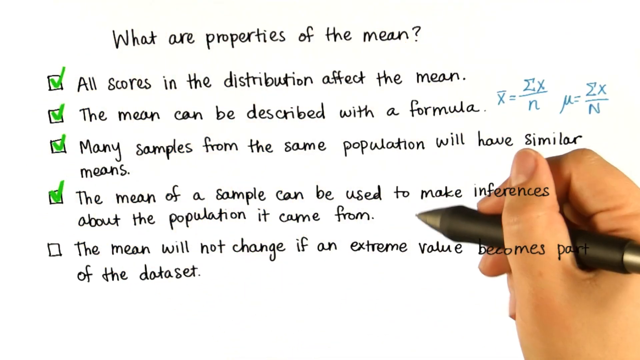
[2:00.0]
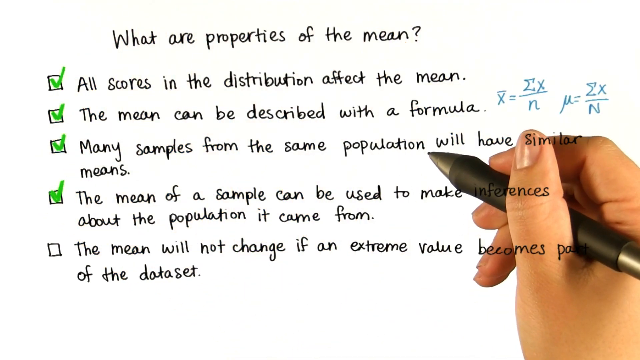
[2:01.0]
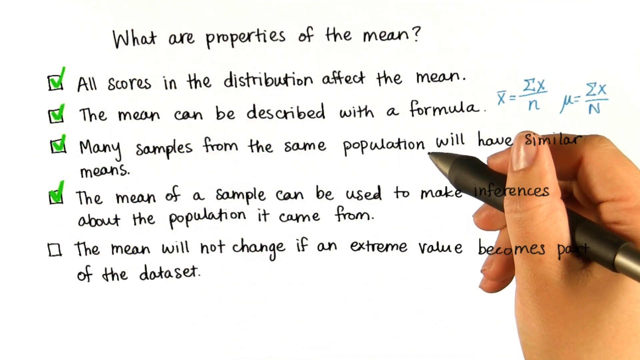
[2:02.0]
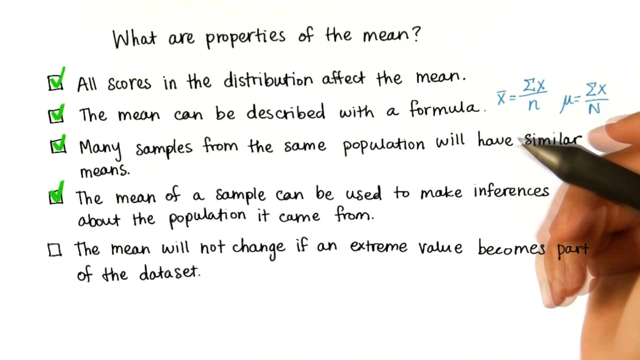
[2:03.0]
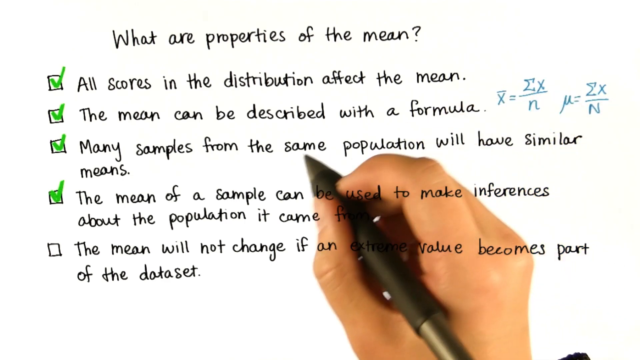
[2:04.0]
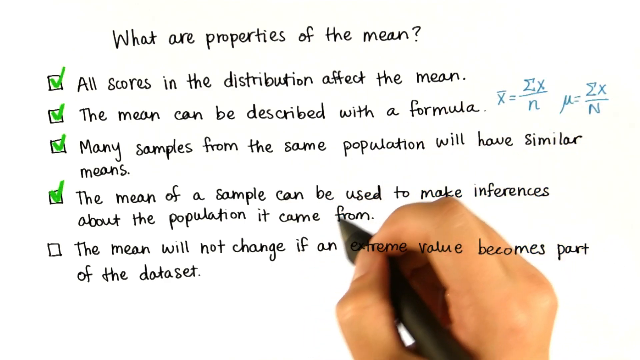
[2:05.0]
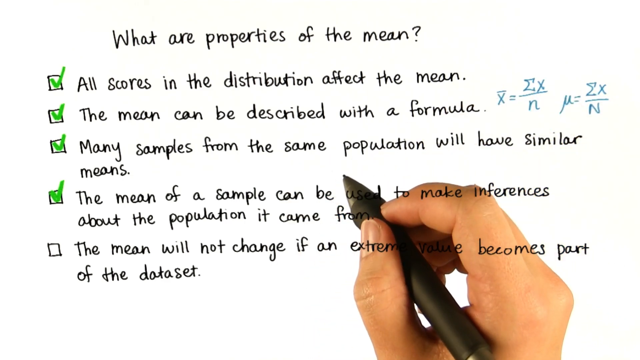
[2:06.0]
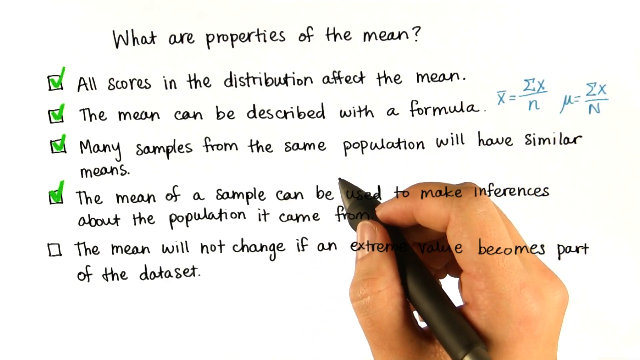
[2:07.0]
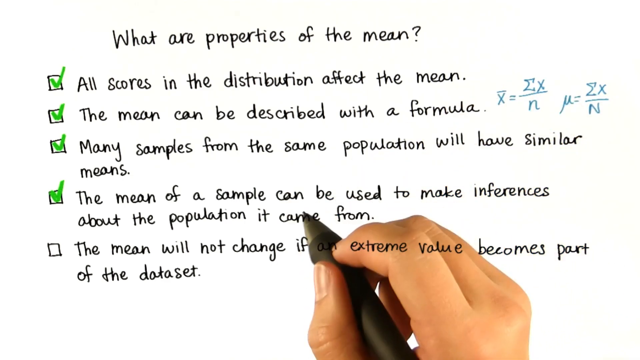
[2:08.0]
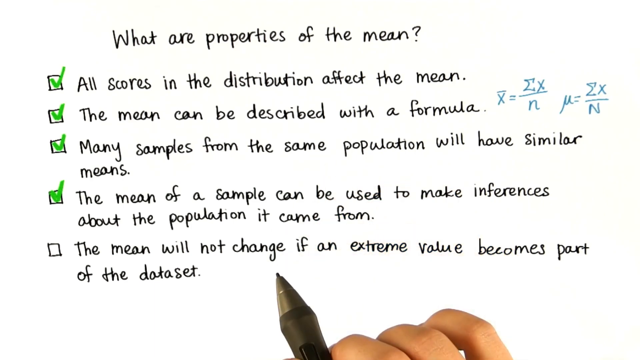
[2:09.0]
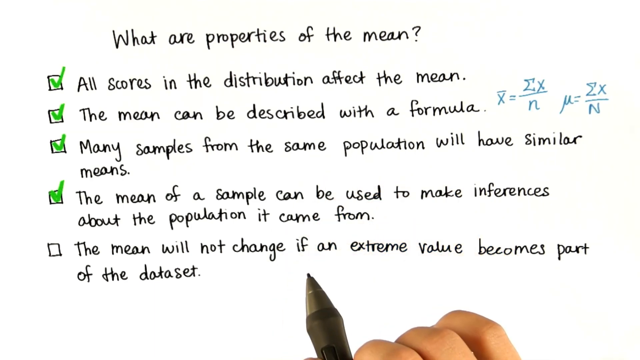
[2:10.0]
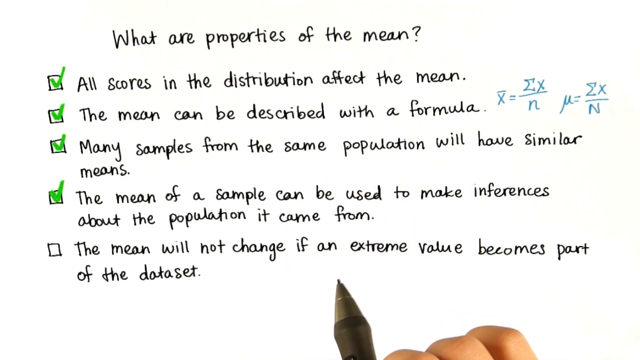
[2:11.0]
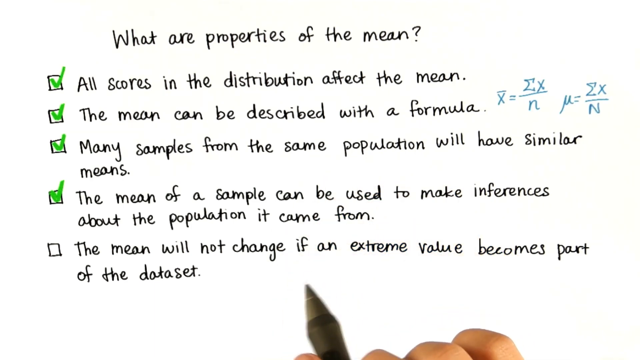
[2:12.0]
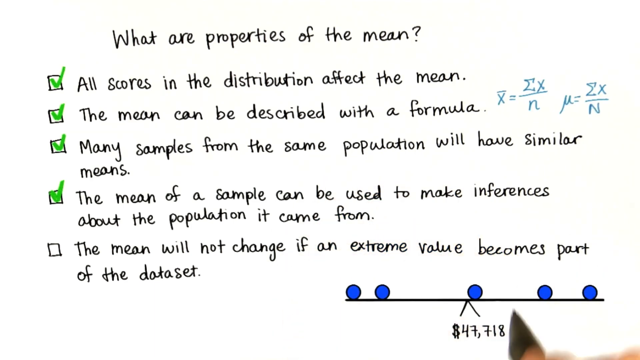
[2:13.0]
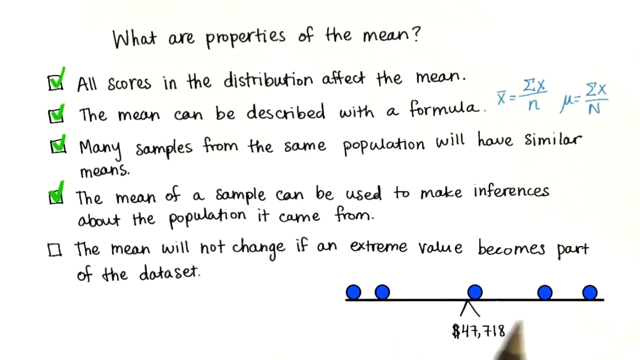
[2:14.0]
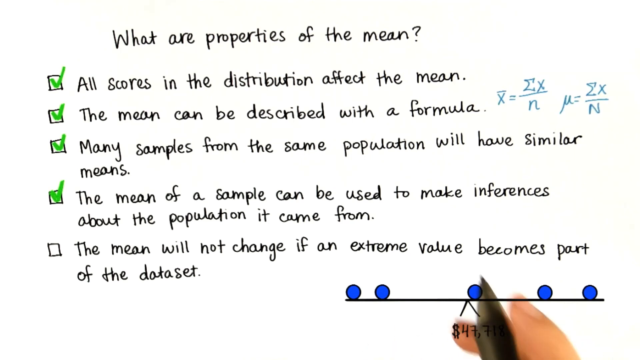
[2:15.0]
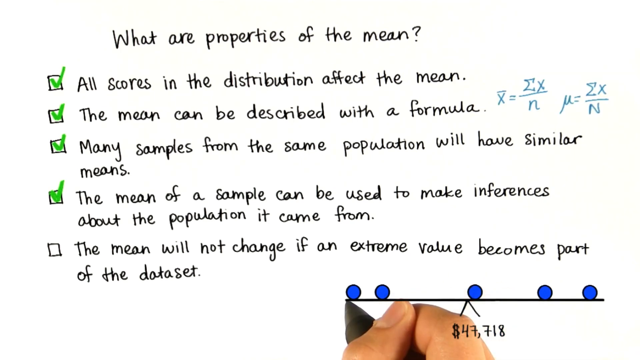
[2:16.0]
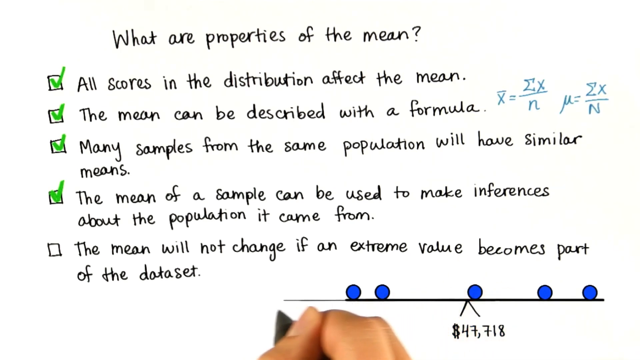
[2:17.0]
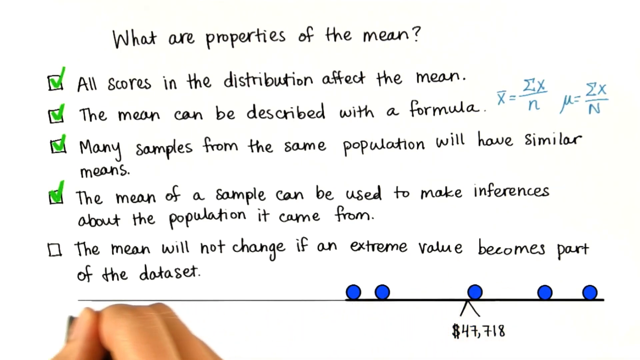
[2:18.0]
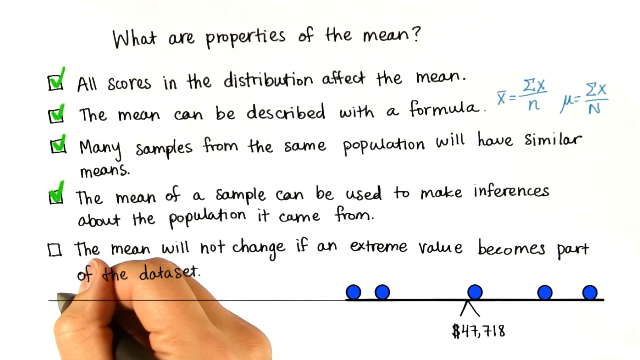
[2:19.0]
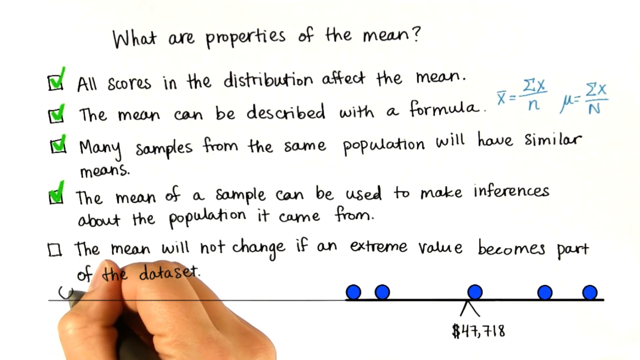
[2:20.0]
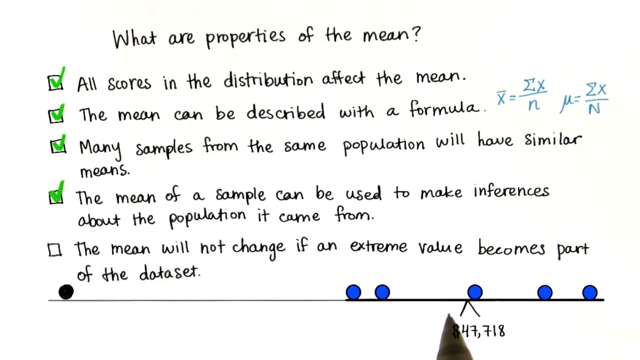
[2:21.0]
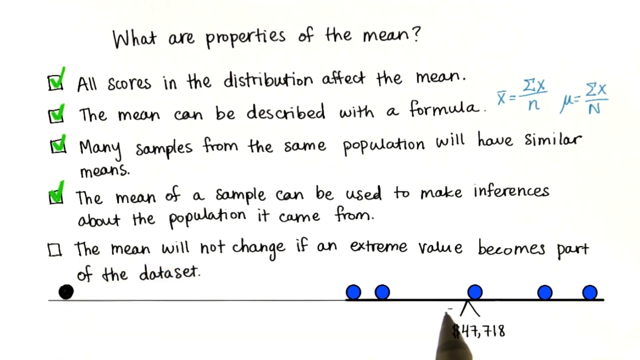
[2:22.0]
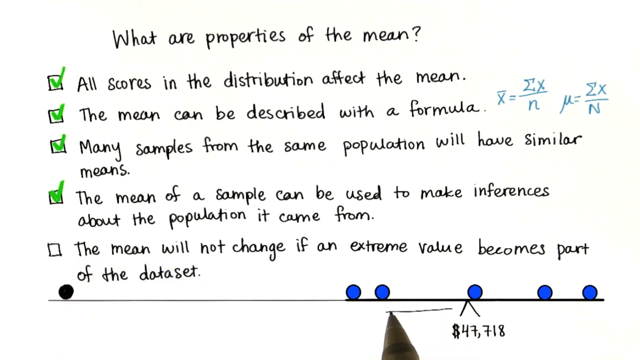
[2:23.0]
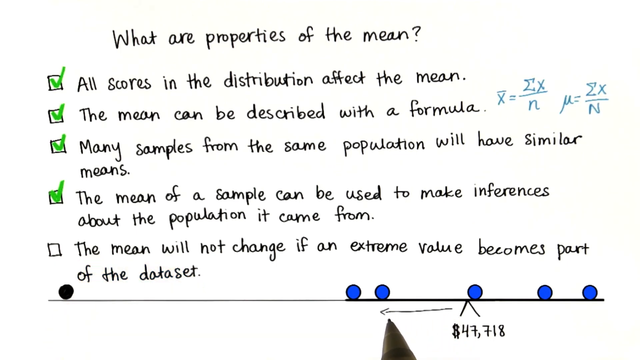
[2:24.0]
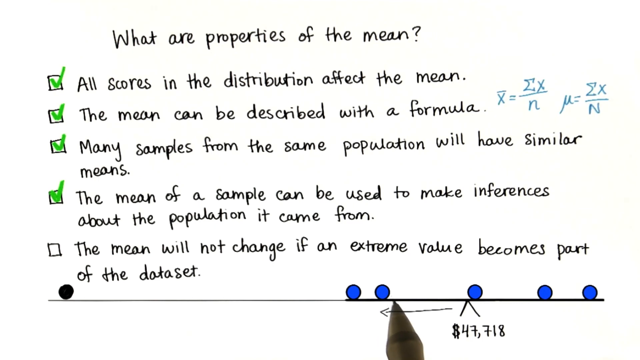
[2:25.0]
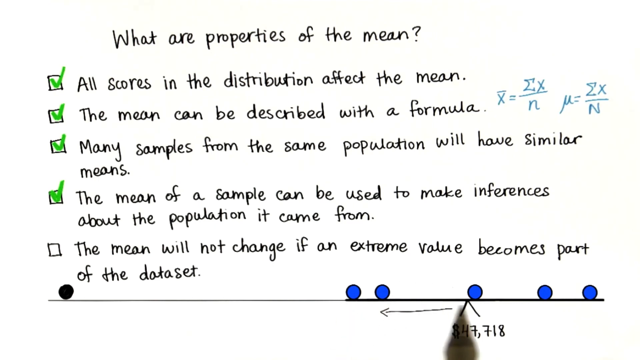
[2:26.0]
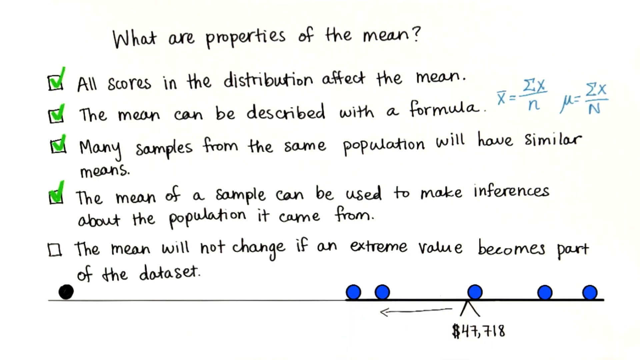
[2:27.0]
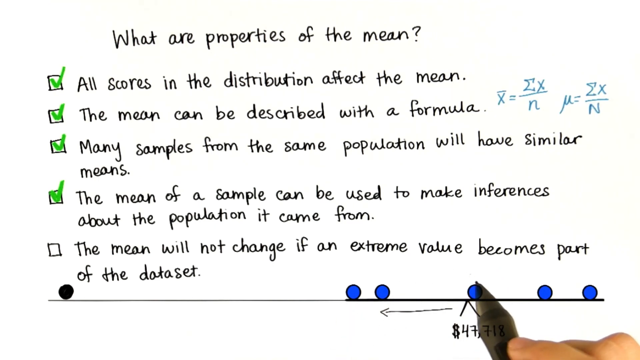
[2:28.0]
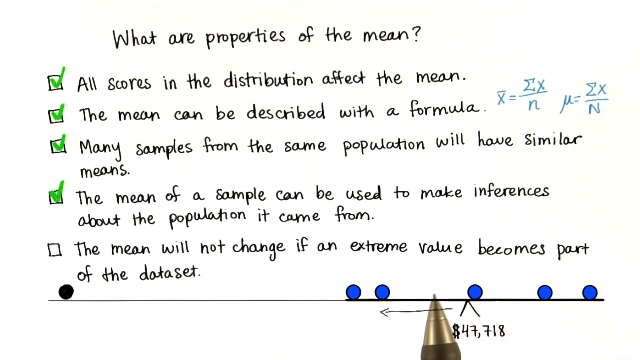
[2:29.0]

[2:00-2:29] A whiteboard shows the title "what are properties of the mean?" and five bullet points of text, each with a square checkbox. The first four are checked off with a big green checkmark, while the last one remains unchecked, and two equations are already written out. The person holds a pen and circles its tip around the fourth bullet point, then moves the pen toward the fifth point. A balance then appears with blue balls along it. He moves his pen around some of the blue balls and draws an extended line along the balance, then draws a black ball at the very far left of the balance. He also draws an arrow from the mid-right side of the balance, underneath the black line, pointing all the way to the far left side.